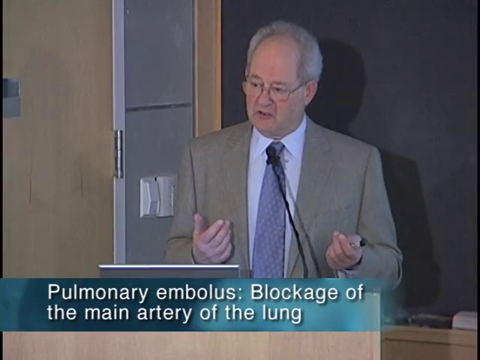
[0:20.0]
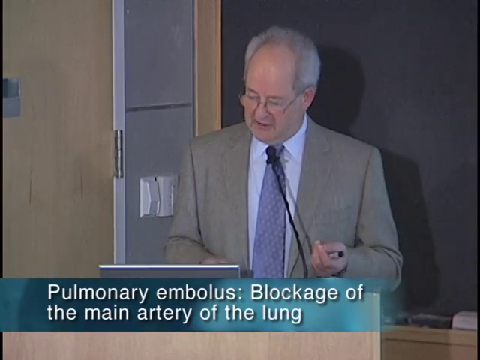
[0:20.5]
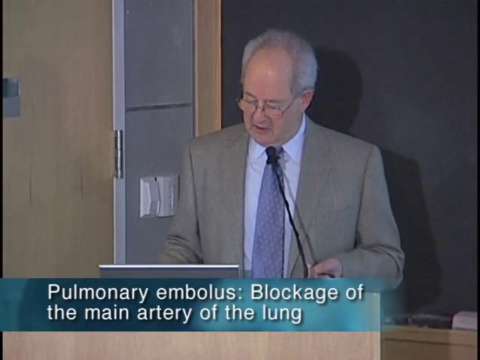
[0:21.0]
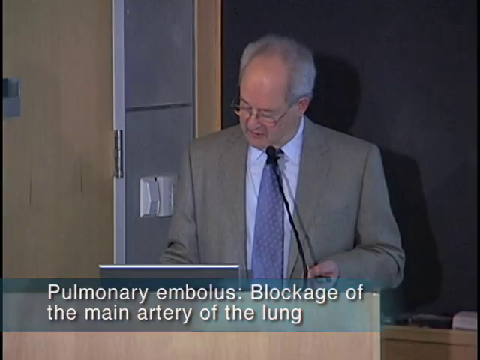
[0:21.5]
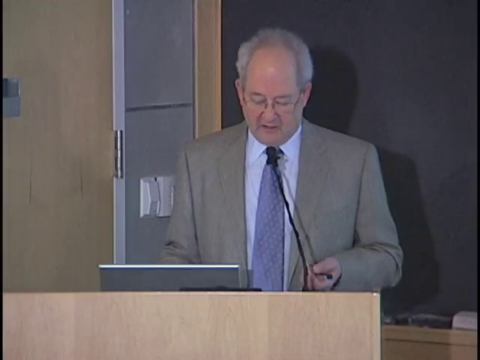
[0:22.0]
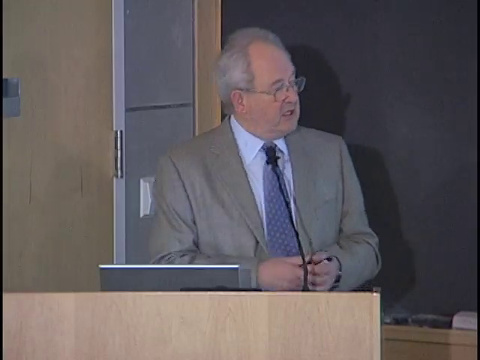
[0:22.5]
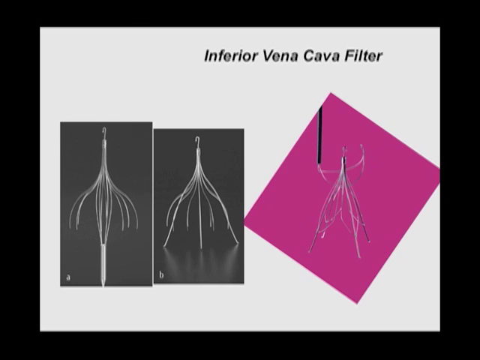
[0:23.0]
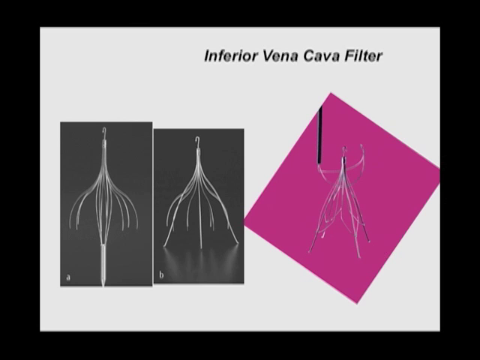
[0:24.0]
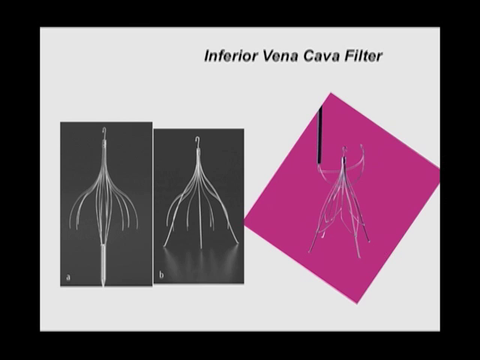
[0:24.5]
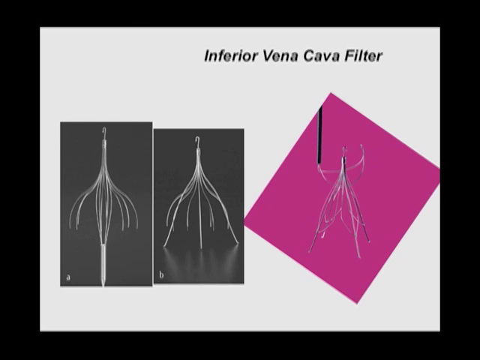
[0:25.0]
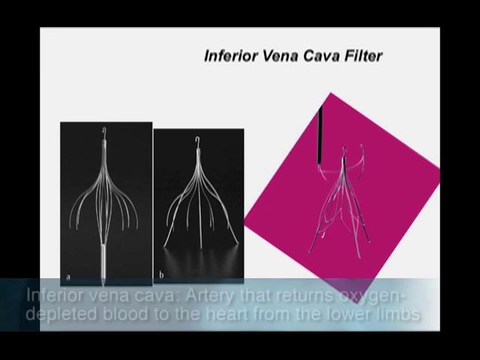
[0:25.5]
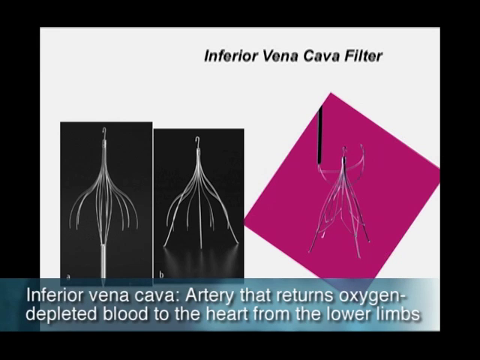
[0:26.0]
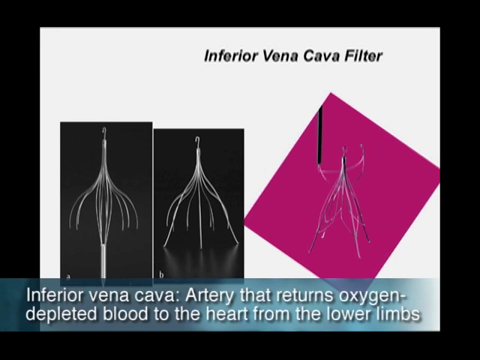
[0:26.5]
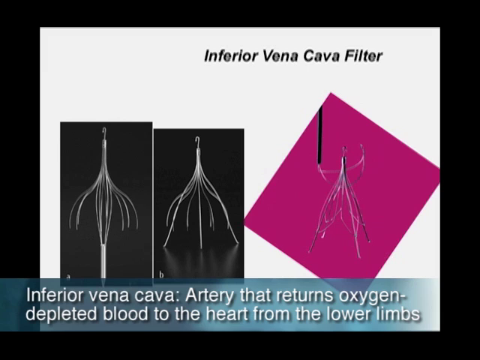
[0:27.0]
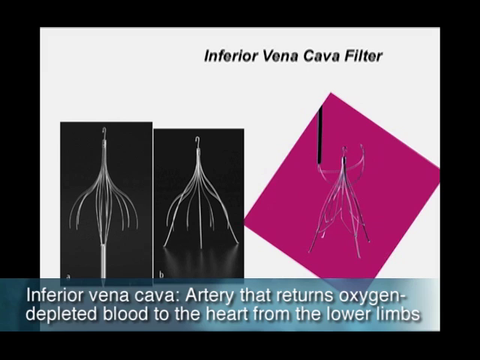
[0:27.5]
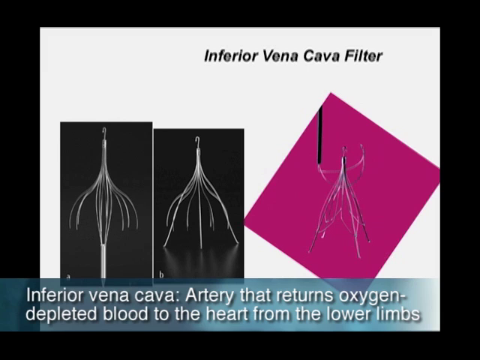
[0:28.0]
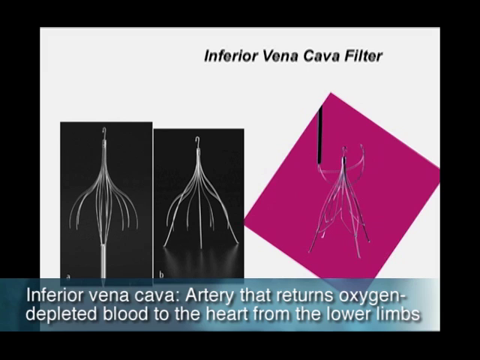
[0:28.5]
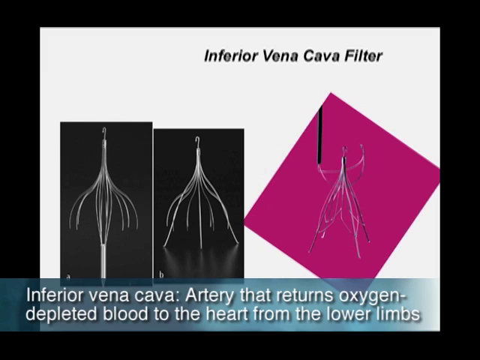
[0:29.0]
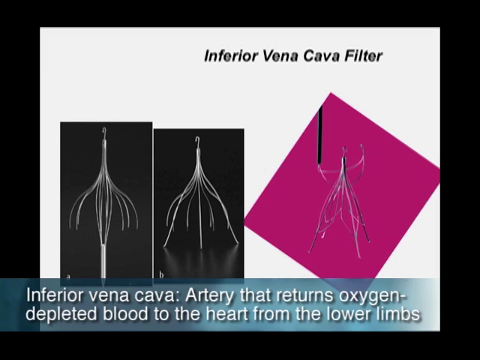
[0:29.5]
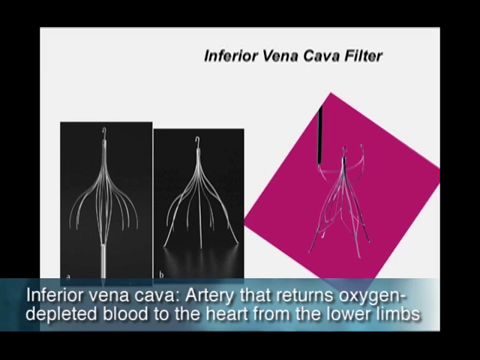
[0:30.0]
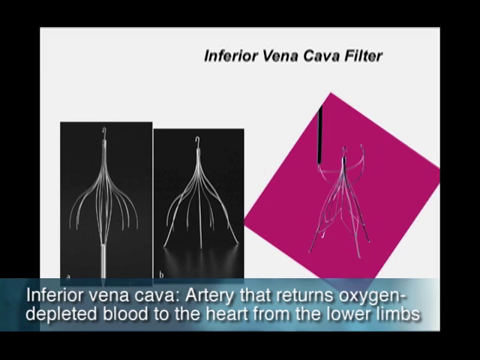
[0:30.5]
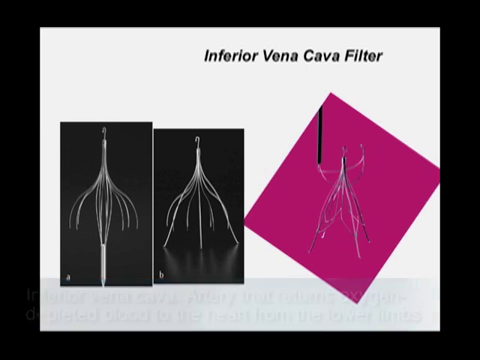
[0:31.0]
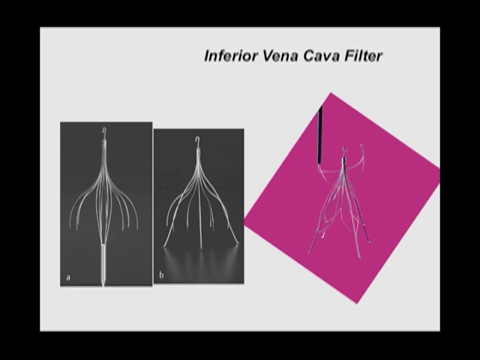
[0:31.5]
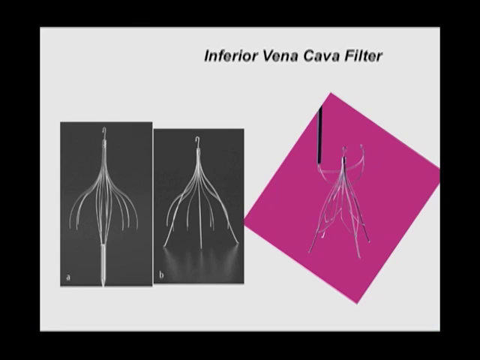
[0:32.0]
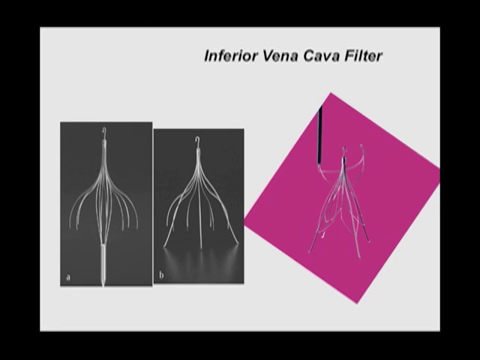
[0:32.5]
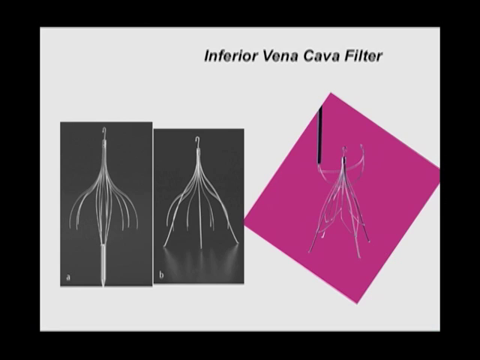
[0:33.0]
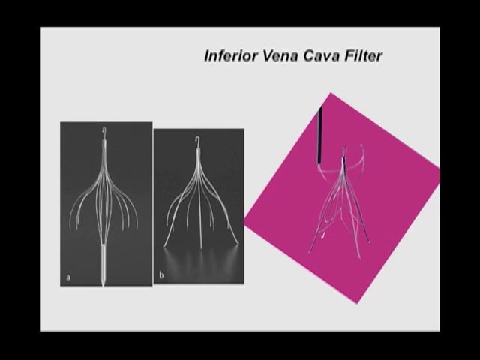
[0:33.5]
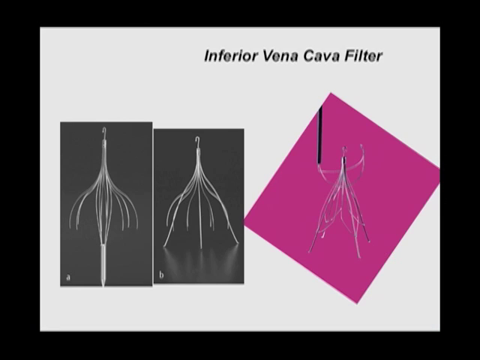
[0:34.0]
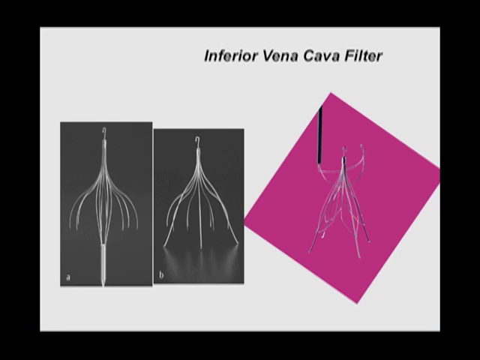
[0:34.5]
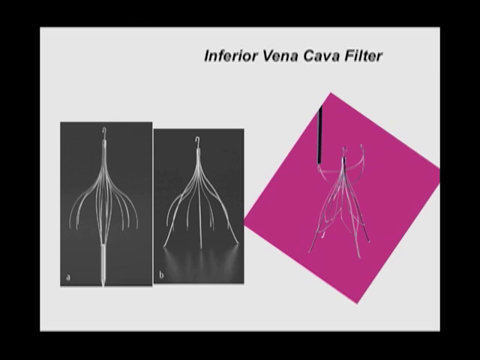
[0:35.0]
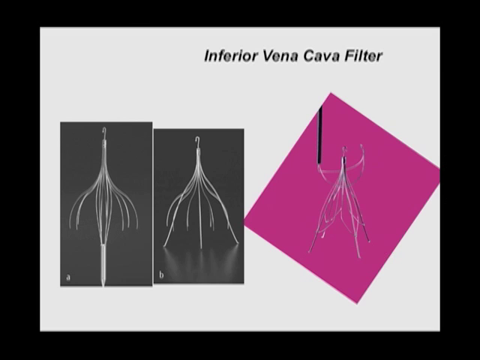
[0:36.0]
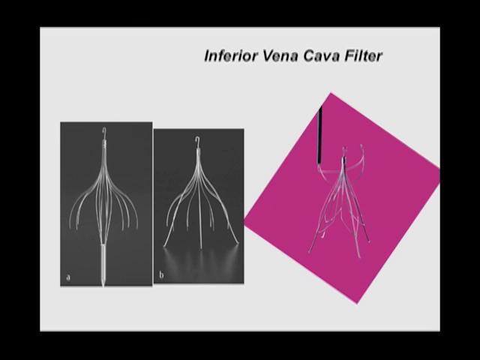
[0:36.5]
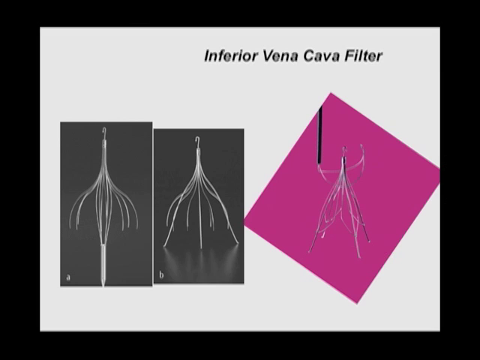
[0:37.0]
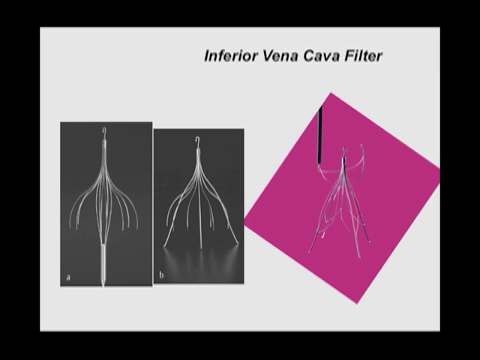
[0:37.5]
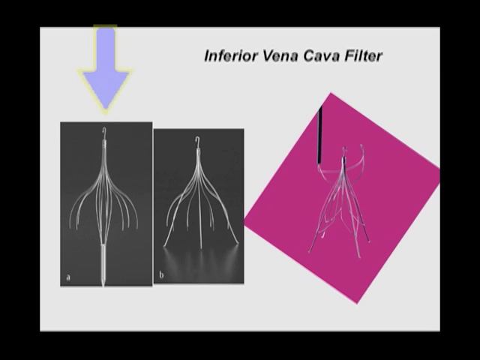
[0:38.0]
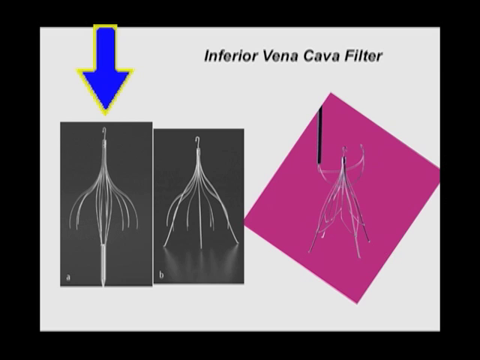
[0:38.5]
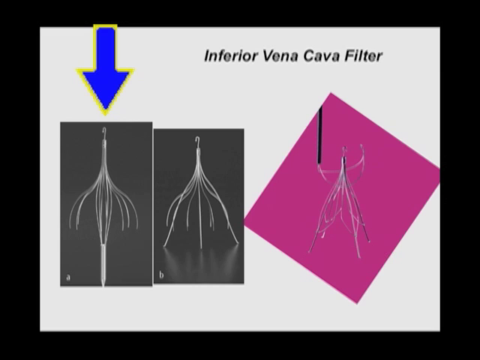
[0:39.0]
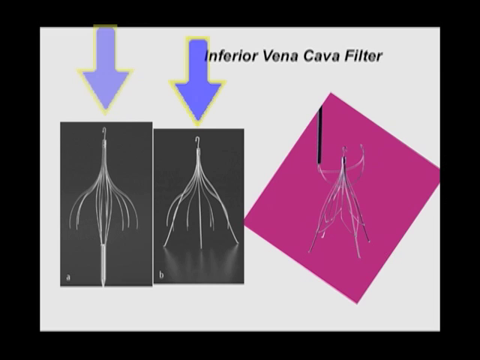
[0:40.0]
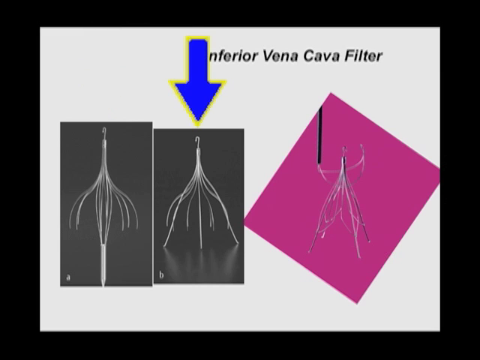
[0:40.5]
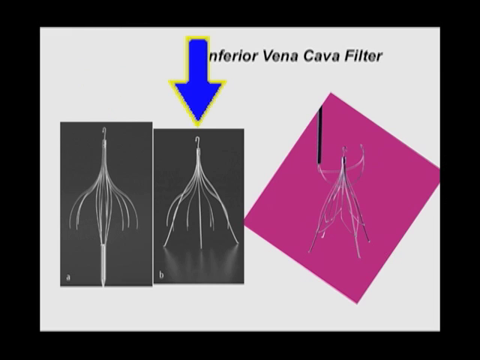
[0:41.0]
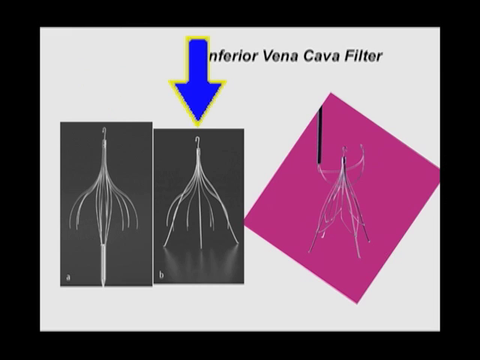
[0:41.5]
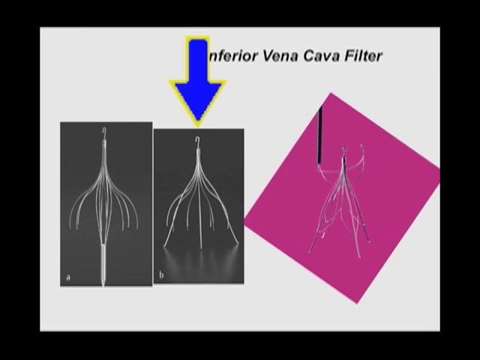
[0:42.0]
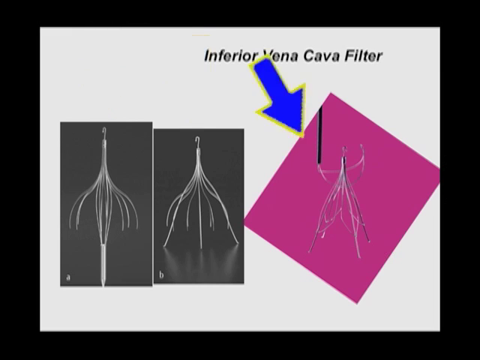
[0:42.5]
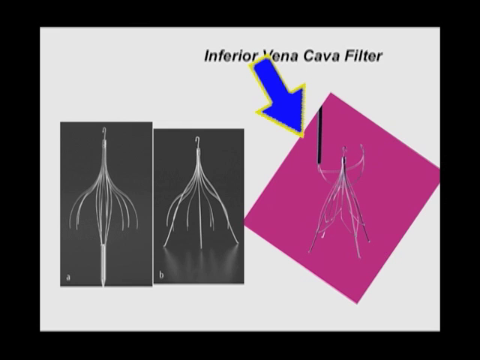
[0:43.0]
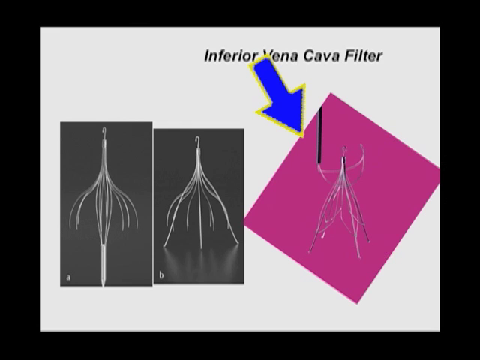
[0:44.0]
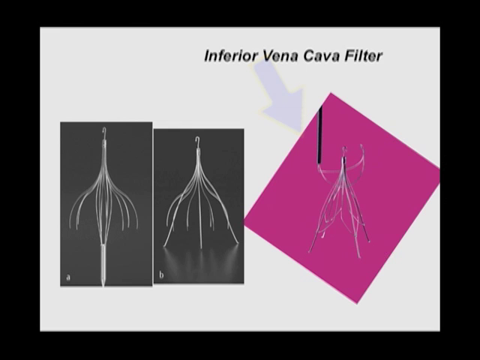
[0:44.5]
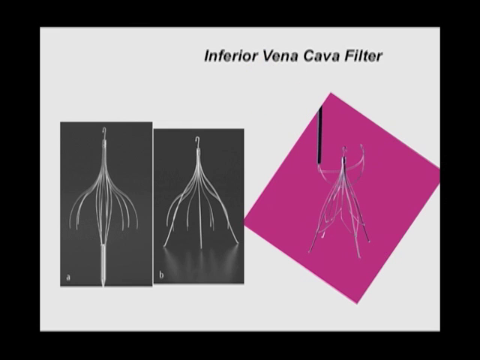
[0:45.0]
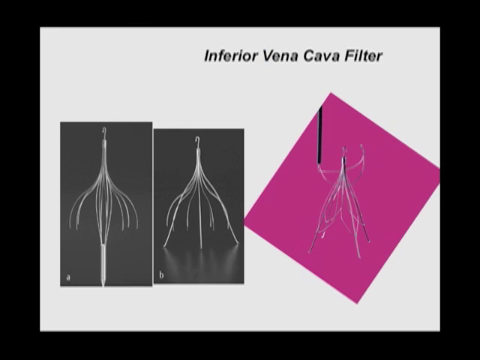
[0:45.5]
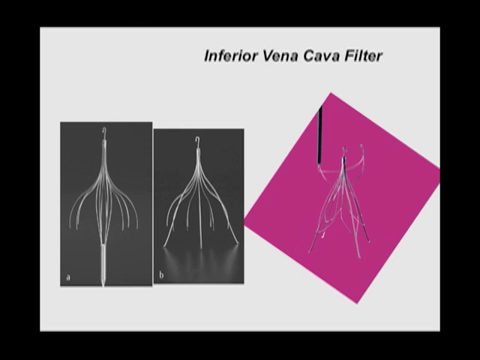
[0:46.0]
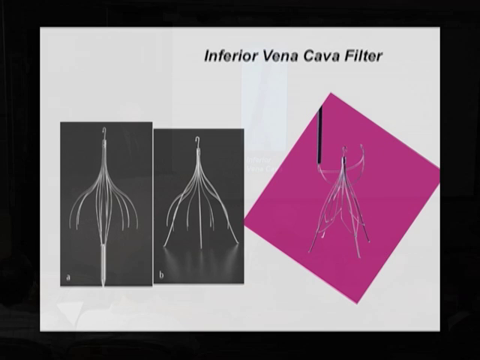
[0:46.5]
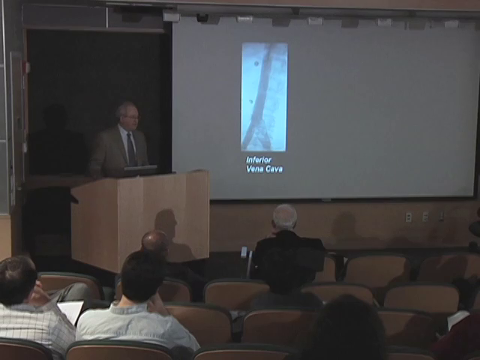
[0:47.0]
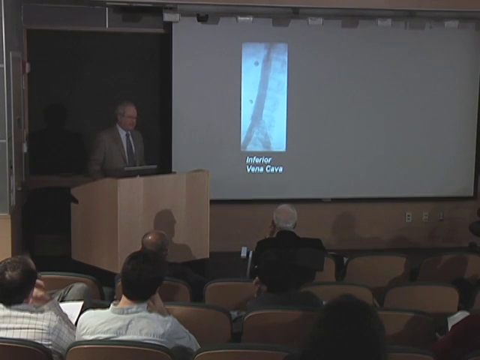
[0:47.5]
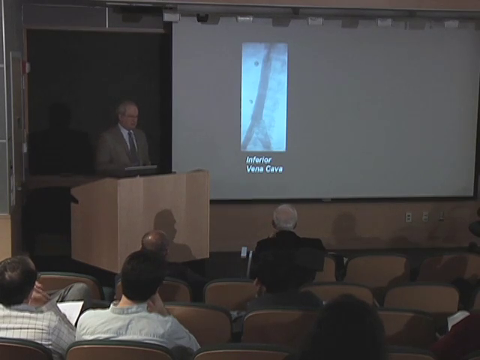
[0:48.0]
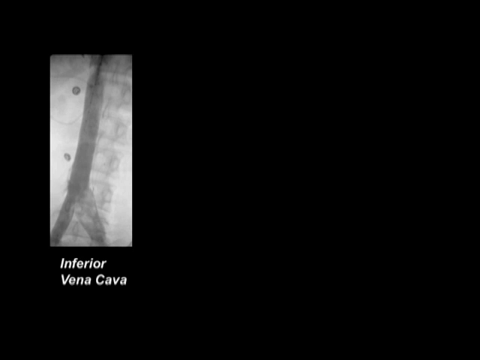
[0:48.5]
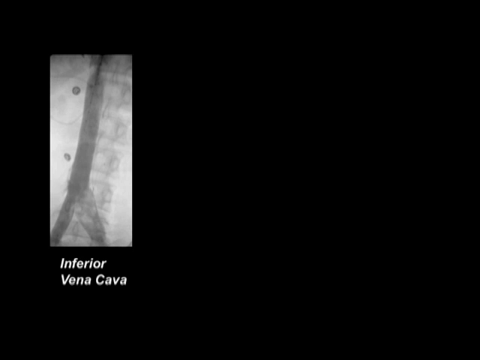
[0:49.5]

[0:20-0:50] A man in a grey suit, with a blue tie and a blue collar connected to the tie, has short blonde white hair and wears a pair of glasses. He looks to be in his 60s, maybe 70s, and speaks into a microphone connected to a podium, with a screen in front of him and a pen in his hand. A blue banner on the screen has white text that says "pulmonary embolus blockage of the main artery of the lung." The text goes off the screen and the video changes to a white image with black text that says "inferior vena cava filter," with photos of it: a pink photo and two grey photos labeled A and B. White text on a blue banner says "inferior vena cava artery that returns oxygen depleted blood to the heart from the lower limbs" and stays on the screen for a period of time. A blue arrow with a white outline or a yellow outline then appears; it goes to A, moves over to B, and then points to the pink image. The video returns to the man standing at the podium, seen kind of from a distance, with the screen showing his presentation and some people sitting in chairs watching. It then goes to a black screen with an image of the inferior vena cava.